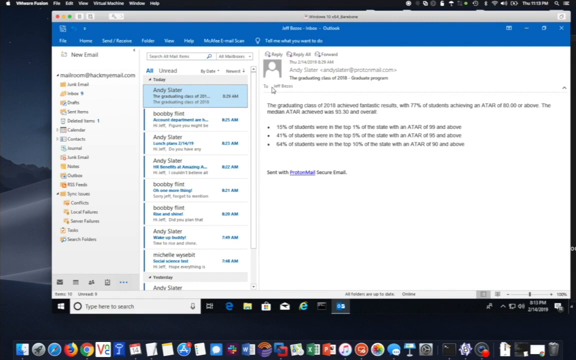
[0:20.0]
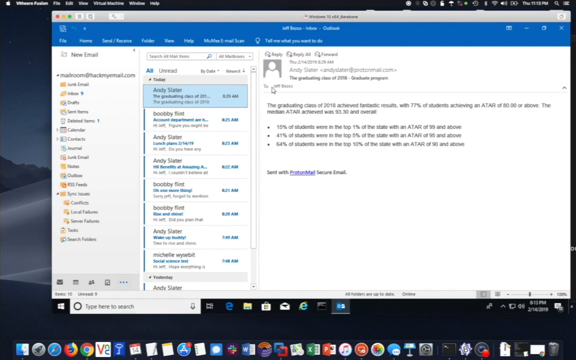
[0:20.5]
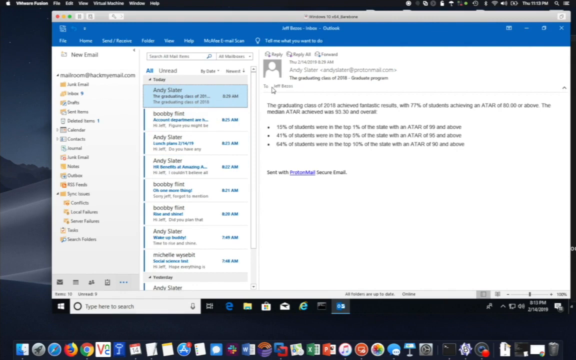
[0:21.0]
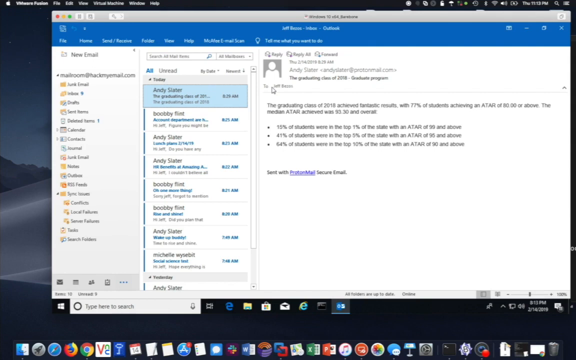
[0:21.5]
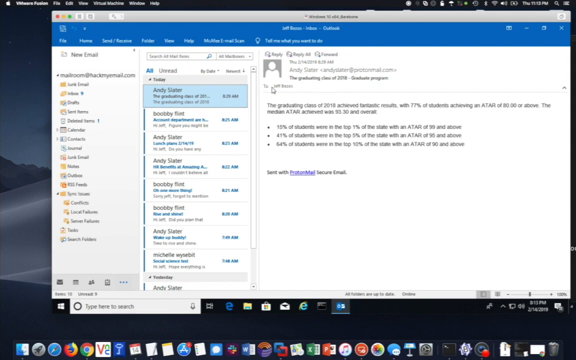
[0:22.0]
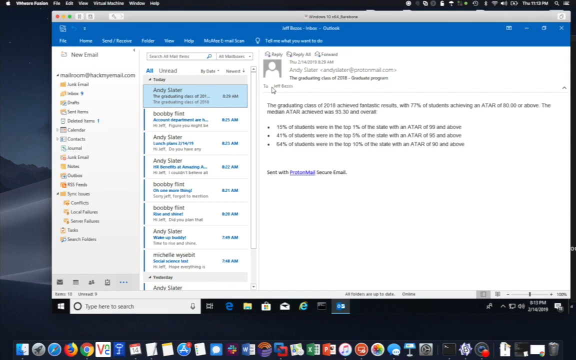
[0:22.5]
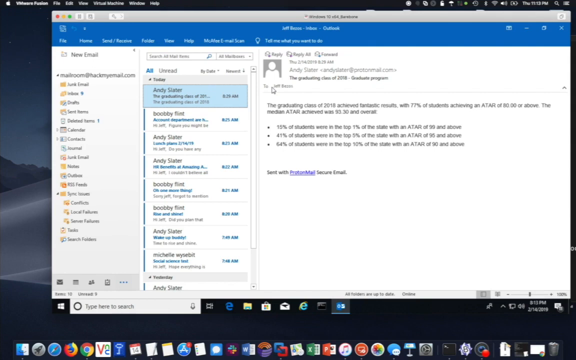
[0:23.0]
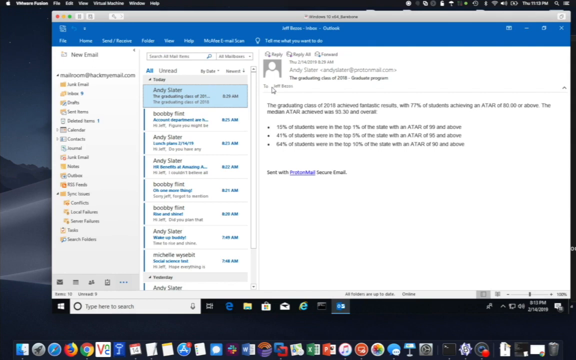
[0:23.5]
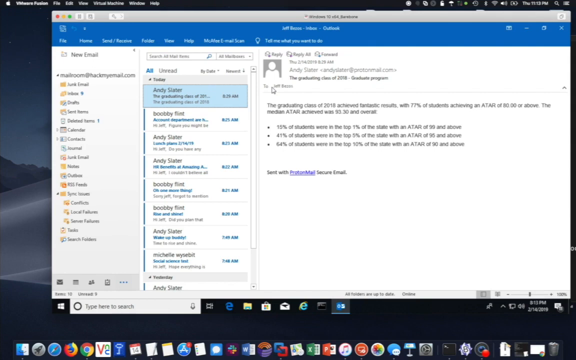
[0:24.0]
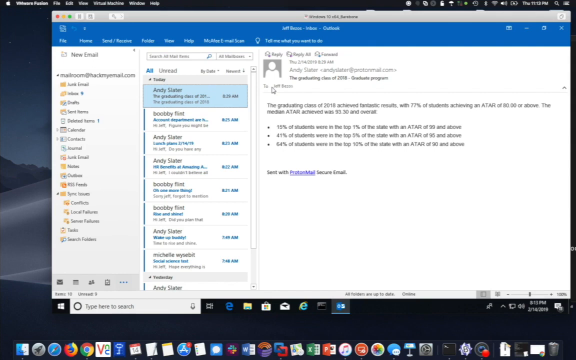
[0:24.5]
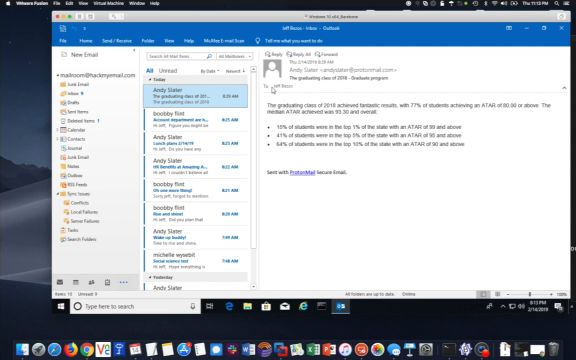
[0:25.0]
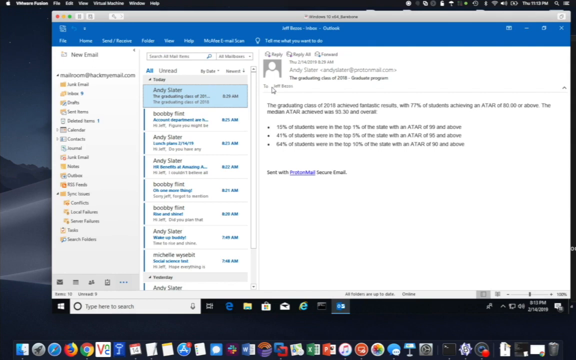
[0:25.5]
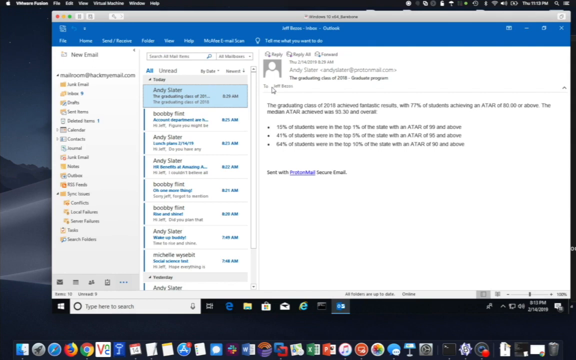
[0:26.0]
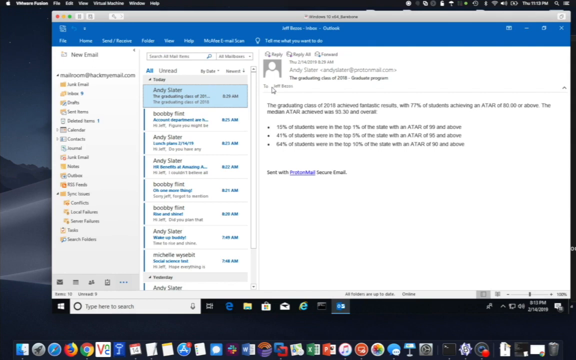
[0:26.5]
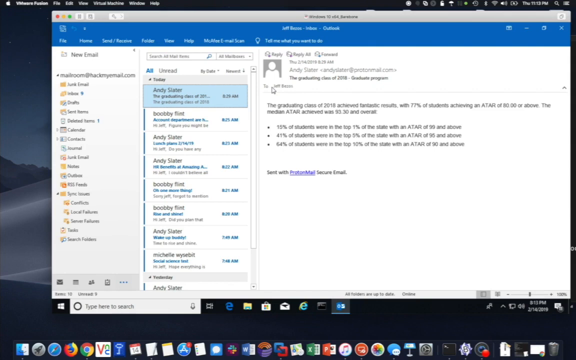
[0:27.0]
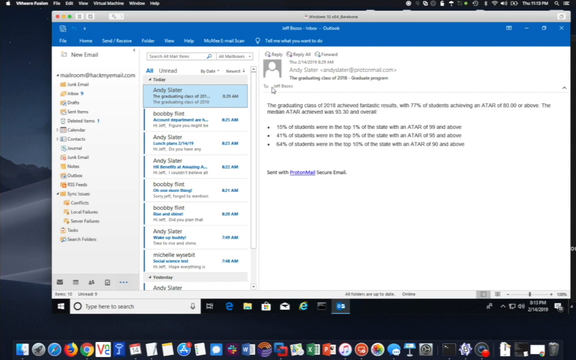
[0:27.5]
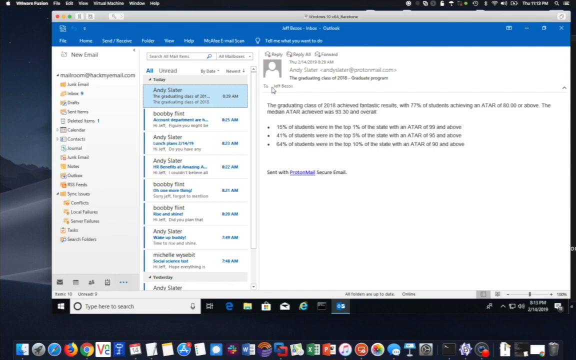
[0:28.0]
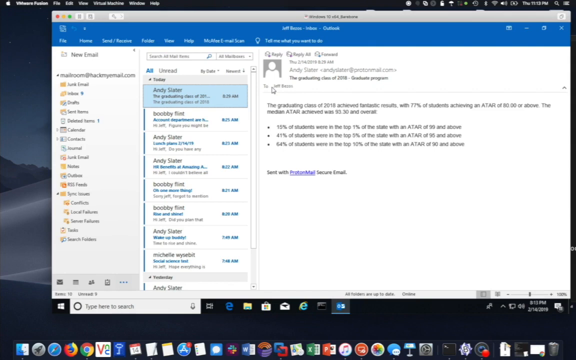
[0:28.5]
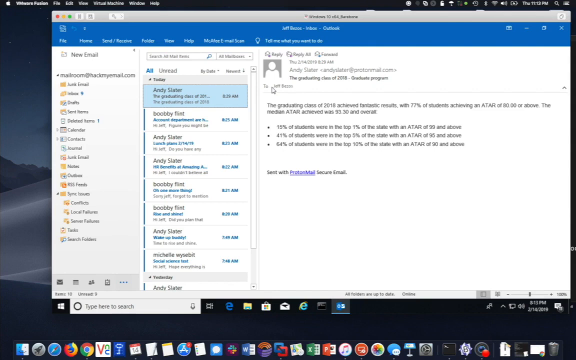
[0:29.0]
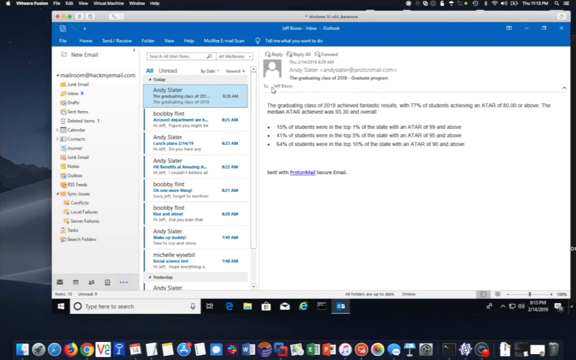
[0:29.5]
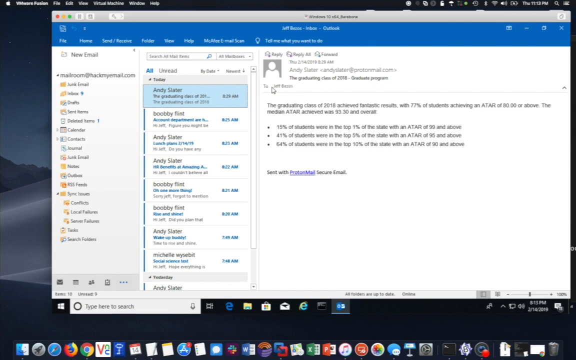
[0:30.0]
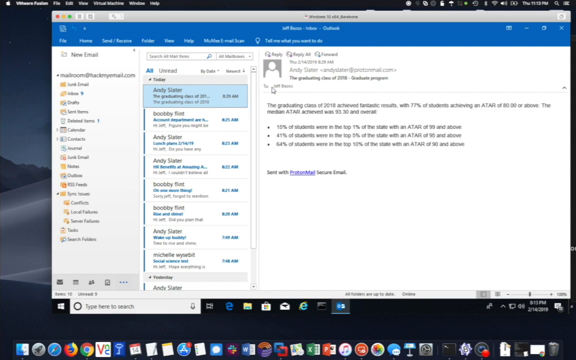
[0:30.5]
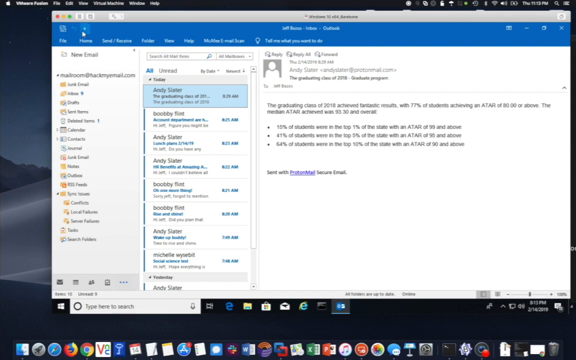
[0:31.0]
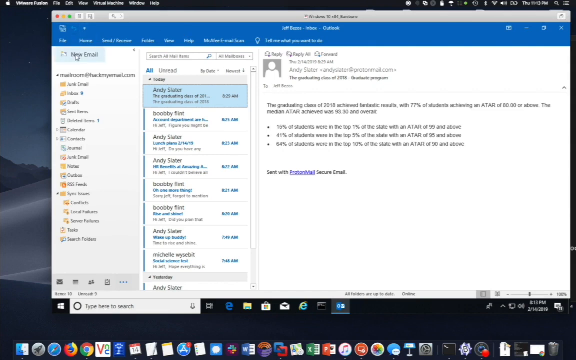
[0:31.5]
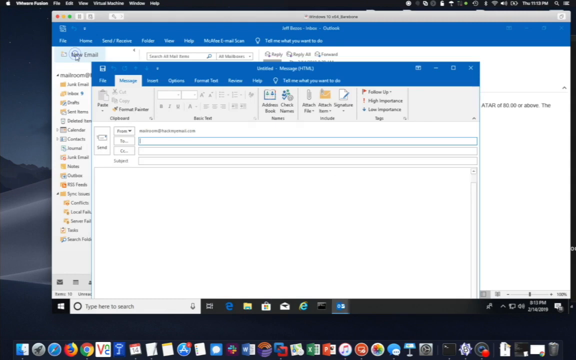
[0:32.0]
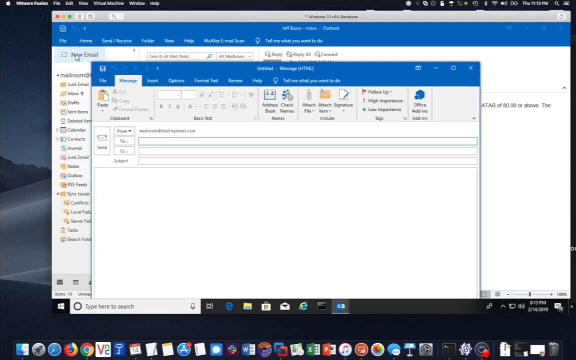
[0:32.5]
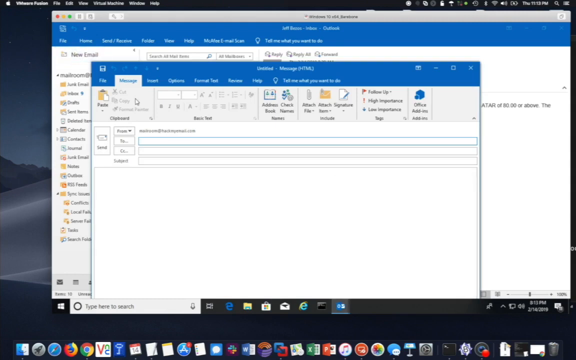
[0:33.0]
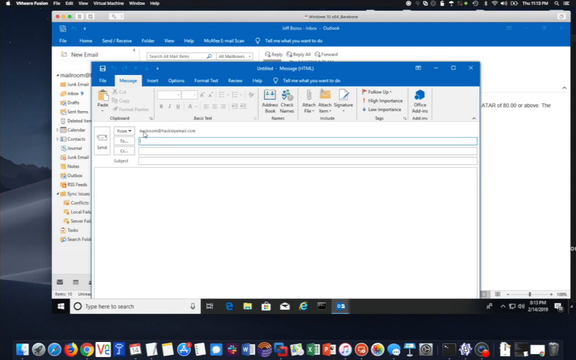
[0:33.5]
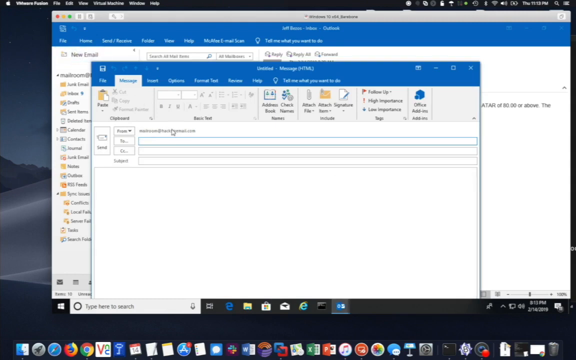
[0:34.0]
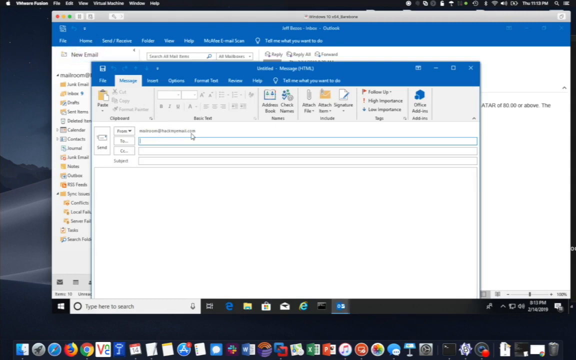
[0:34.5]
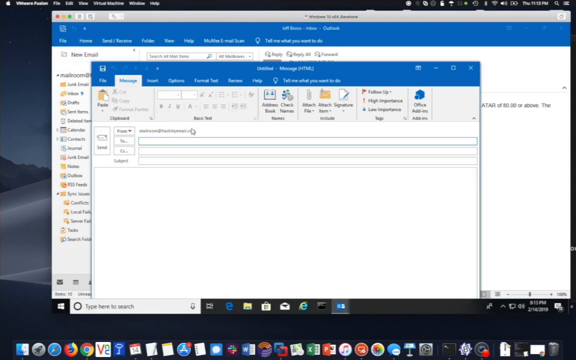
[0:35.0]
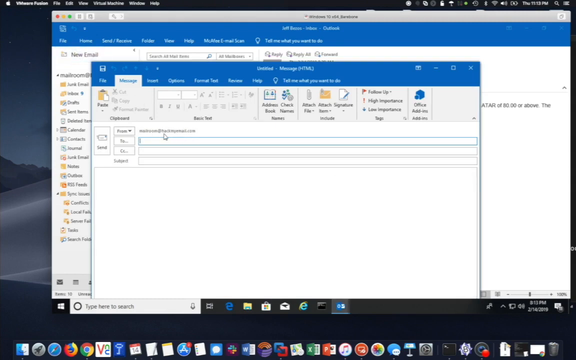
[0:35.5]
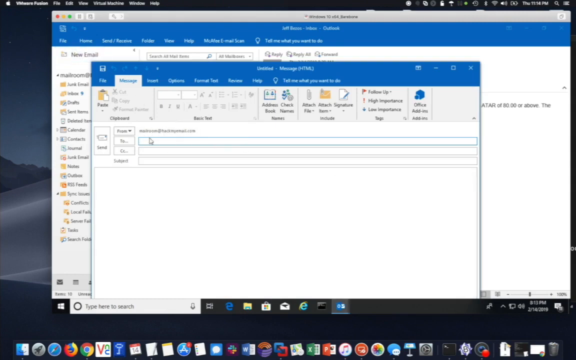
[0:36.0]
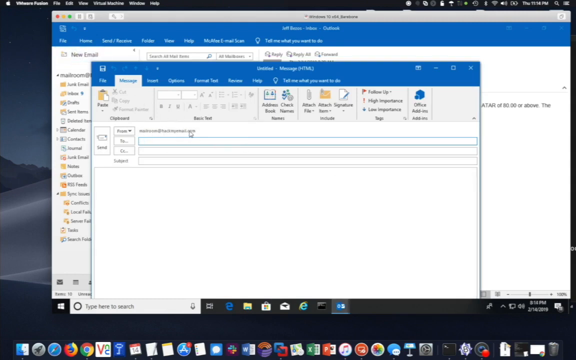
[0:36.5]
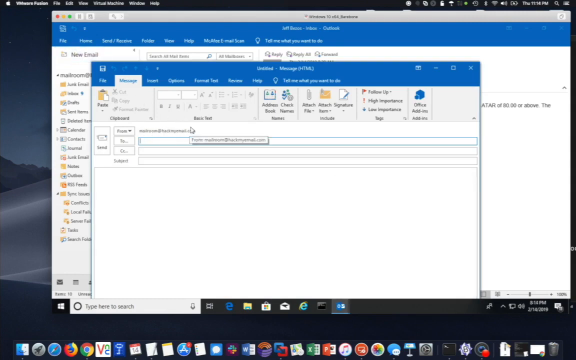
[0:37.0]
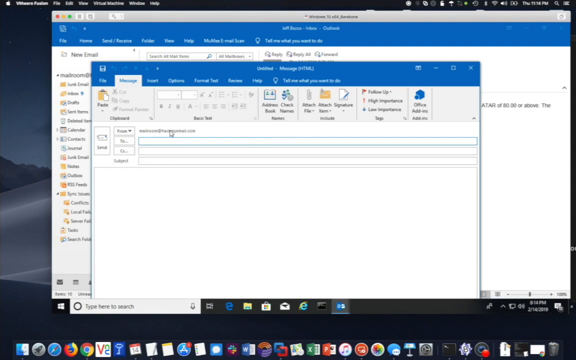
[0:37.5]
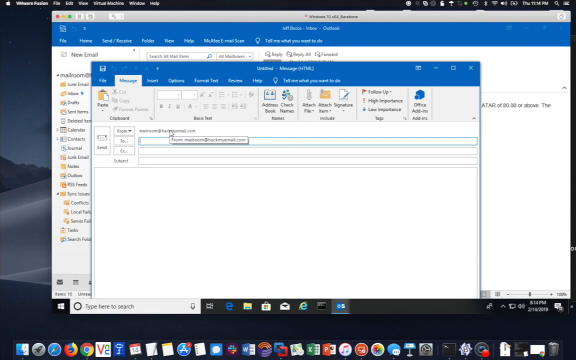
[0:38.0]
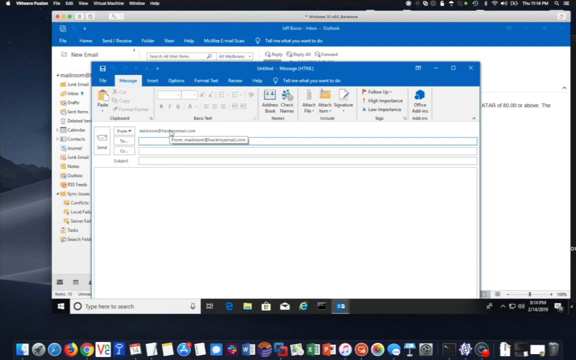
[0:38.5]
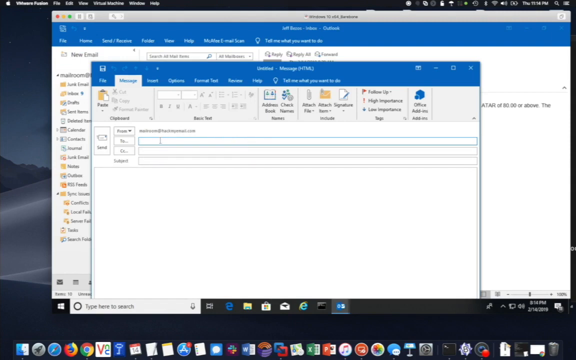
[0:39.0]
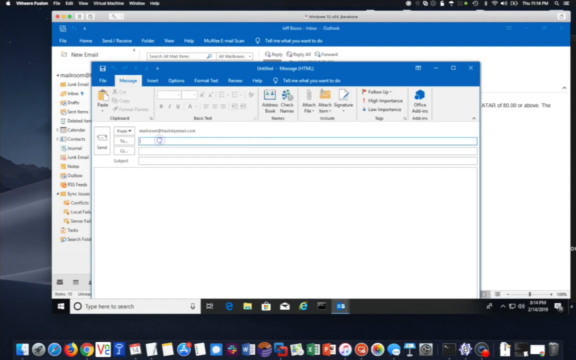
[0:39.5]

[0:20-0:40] An open computer screen shows email in what looks like Outlook. Emails are listed in the center of the screen, and the top one, highlighted, is headed Andy Slater. An open email is on the right. The cursor clicks on a return email and the compose email box opens. The cursor highlights the To box and someone begins typing text into it. The picture is somewhat blurry, making the small details of the typed text and of some of the lists difficult to see, especially within the emails themselves. Around the open page is the computer's screen saver, which looks like a gray and black design; it may be a scene from nature, as what looks like a dark mountain appears on the left.